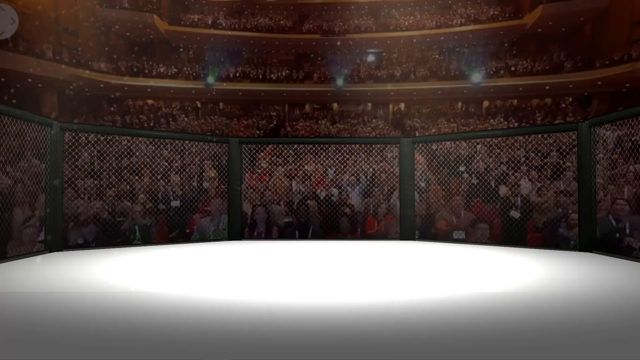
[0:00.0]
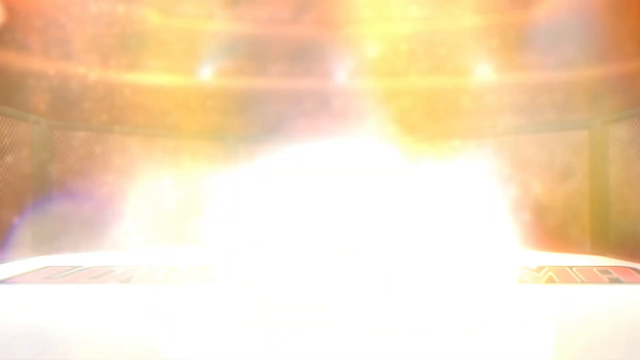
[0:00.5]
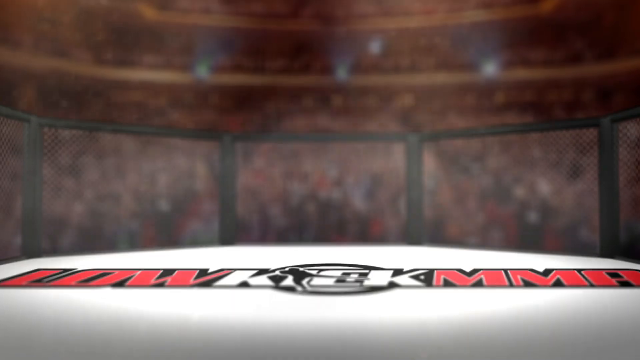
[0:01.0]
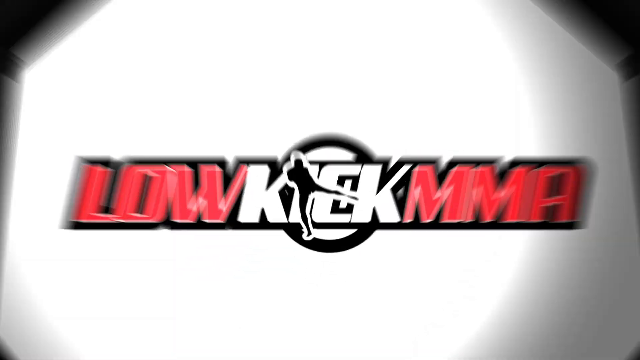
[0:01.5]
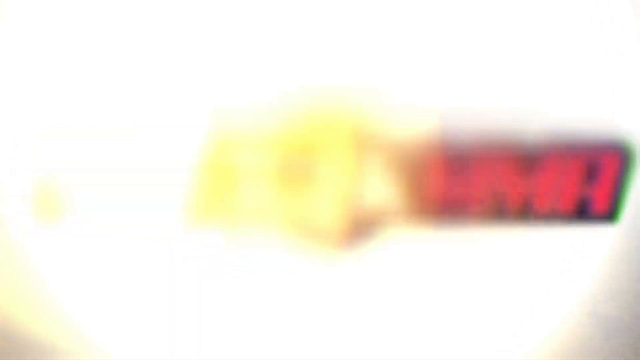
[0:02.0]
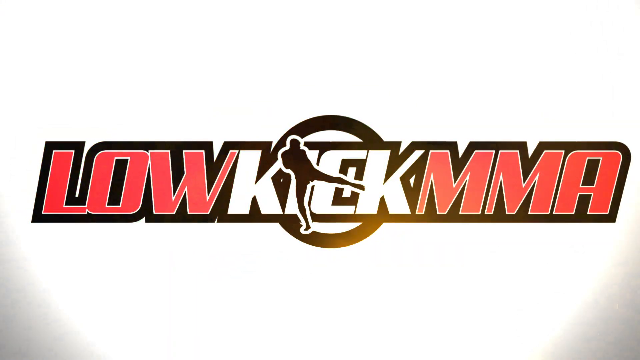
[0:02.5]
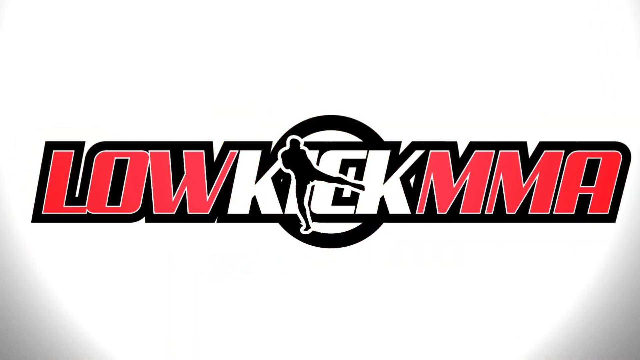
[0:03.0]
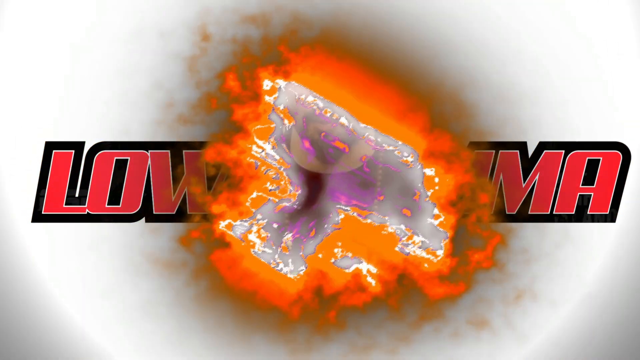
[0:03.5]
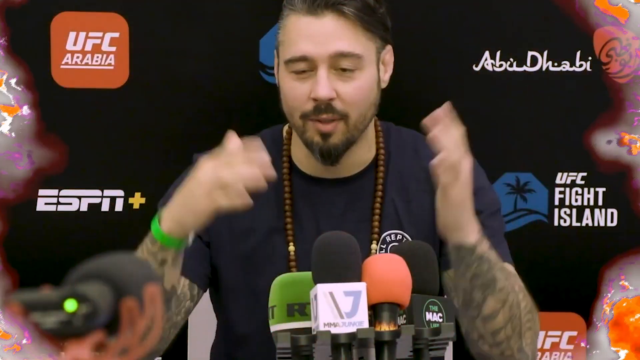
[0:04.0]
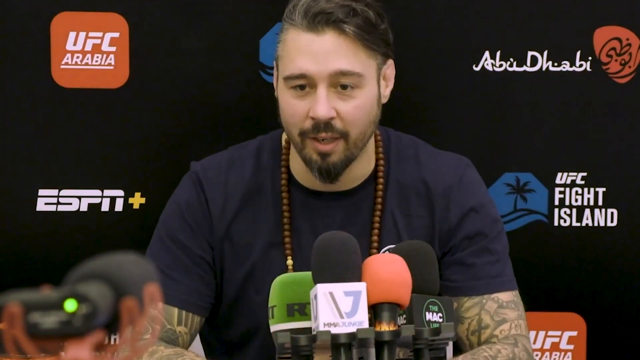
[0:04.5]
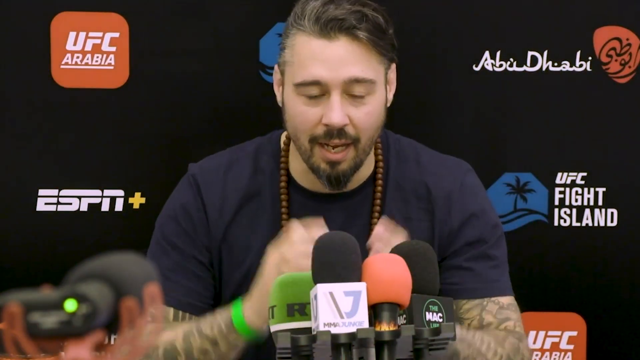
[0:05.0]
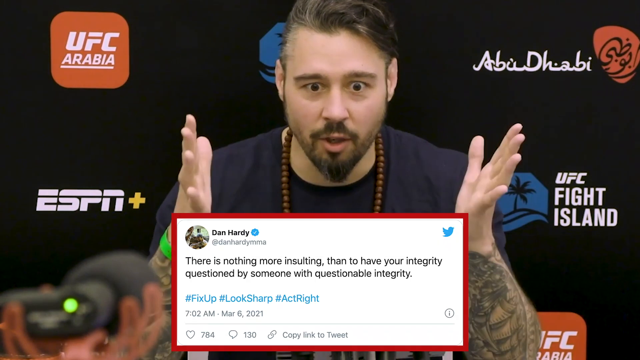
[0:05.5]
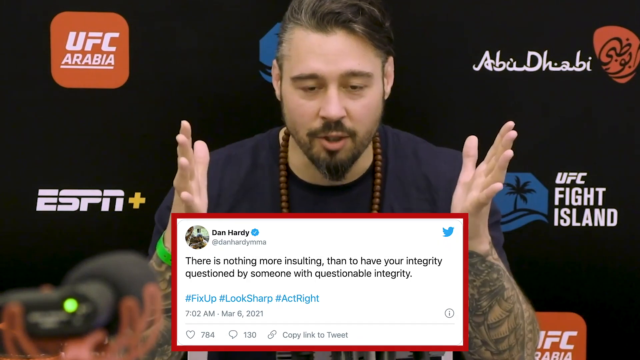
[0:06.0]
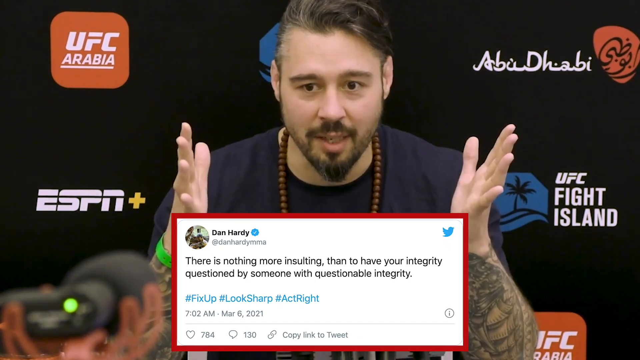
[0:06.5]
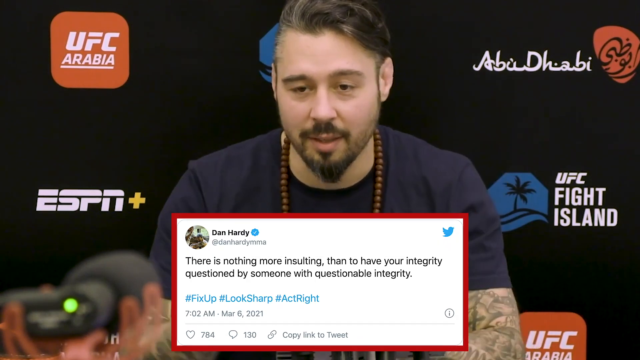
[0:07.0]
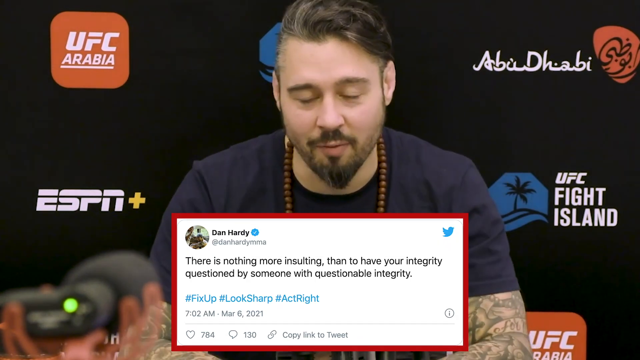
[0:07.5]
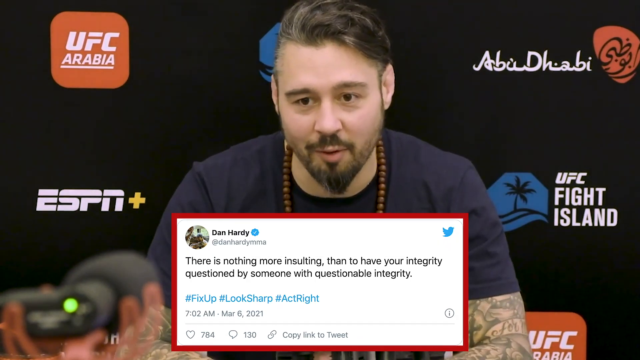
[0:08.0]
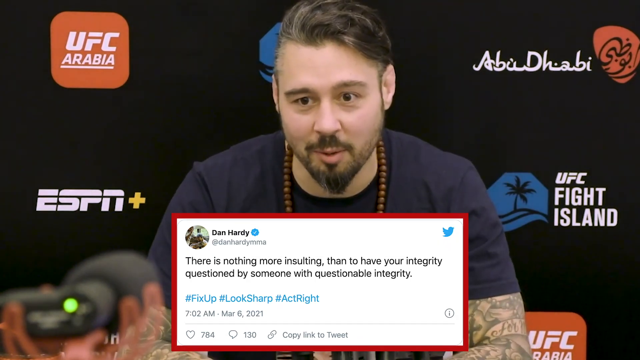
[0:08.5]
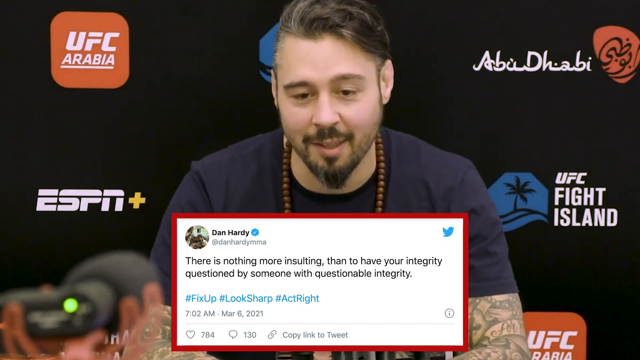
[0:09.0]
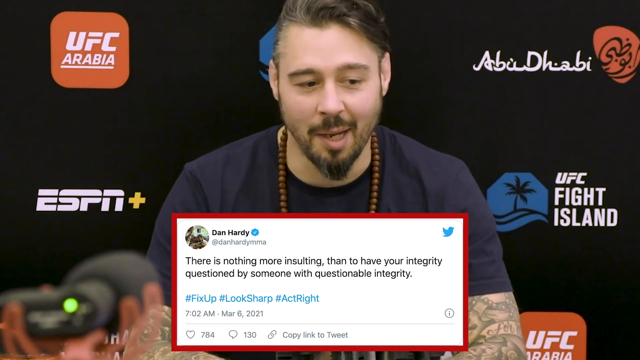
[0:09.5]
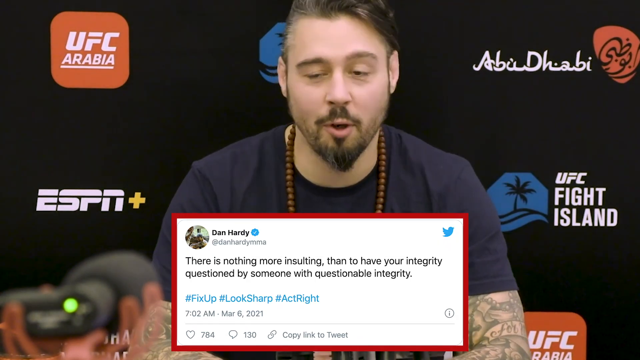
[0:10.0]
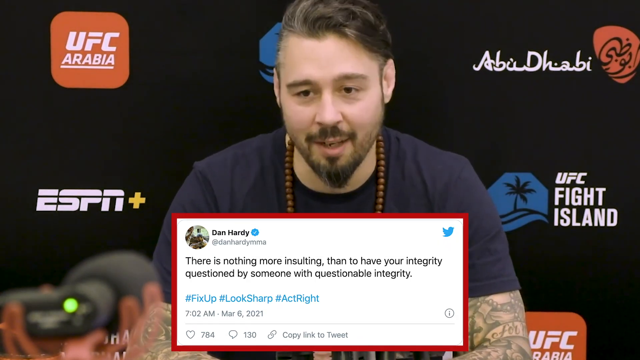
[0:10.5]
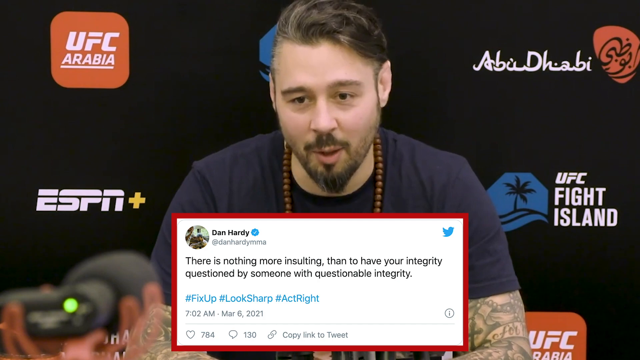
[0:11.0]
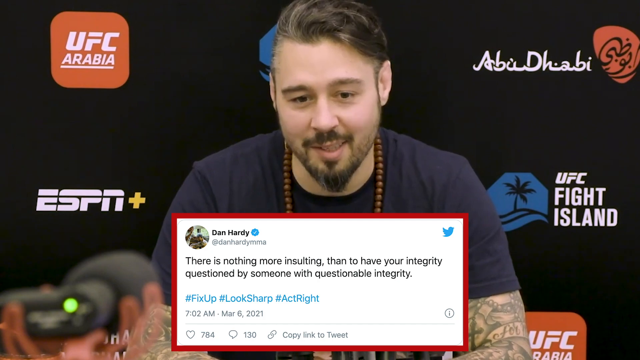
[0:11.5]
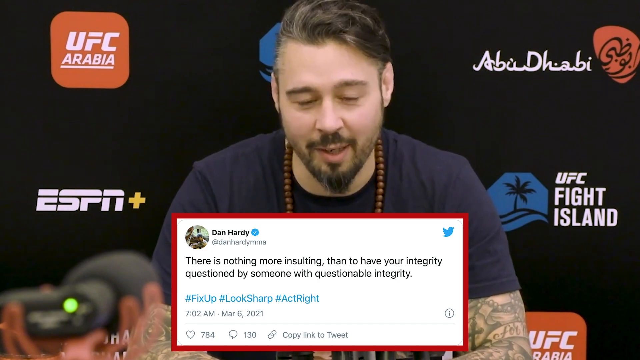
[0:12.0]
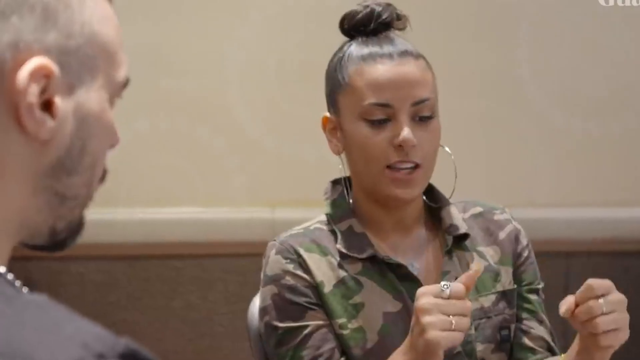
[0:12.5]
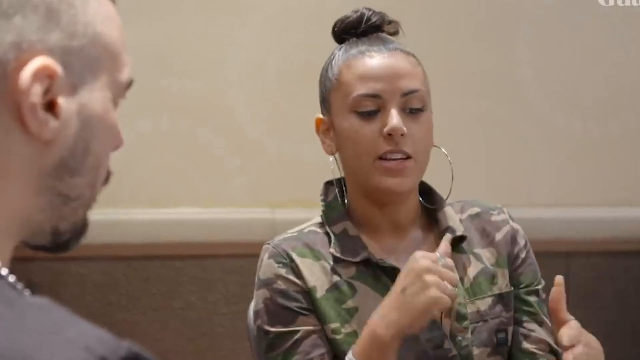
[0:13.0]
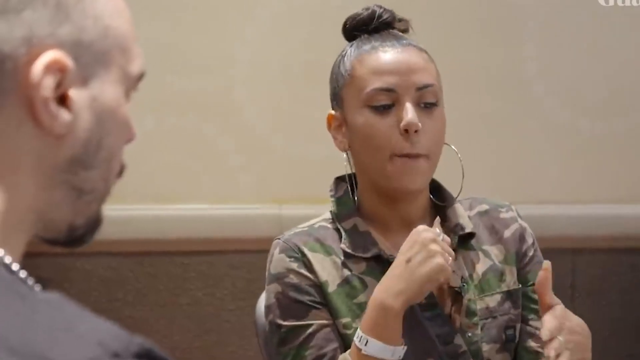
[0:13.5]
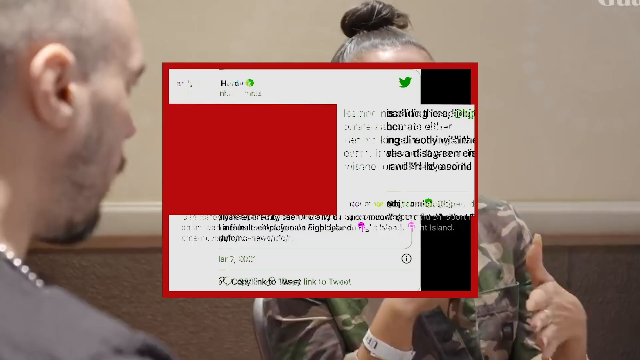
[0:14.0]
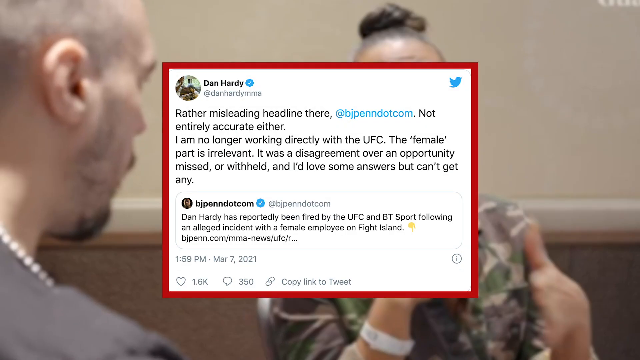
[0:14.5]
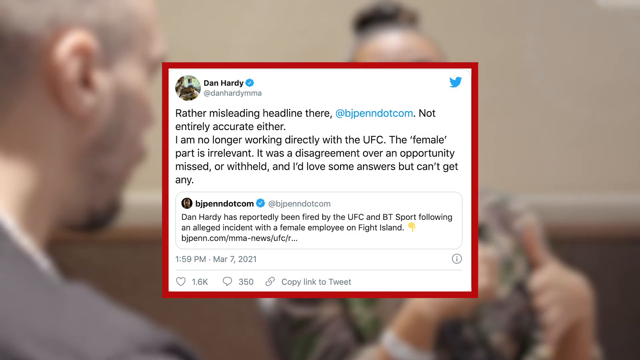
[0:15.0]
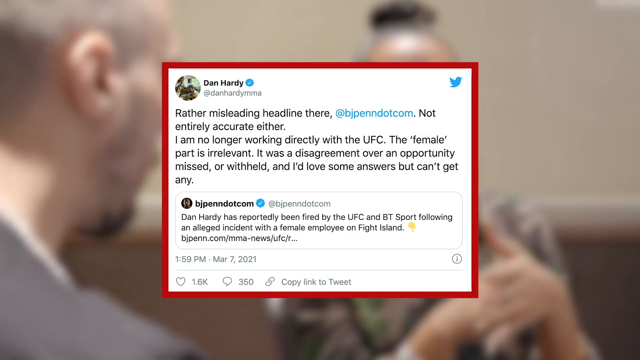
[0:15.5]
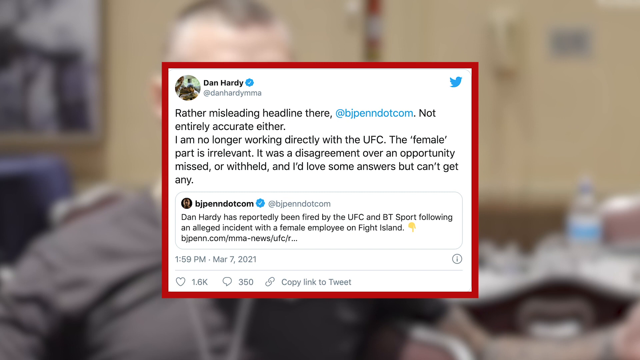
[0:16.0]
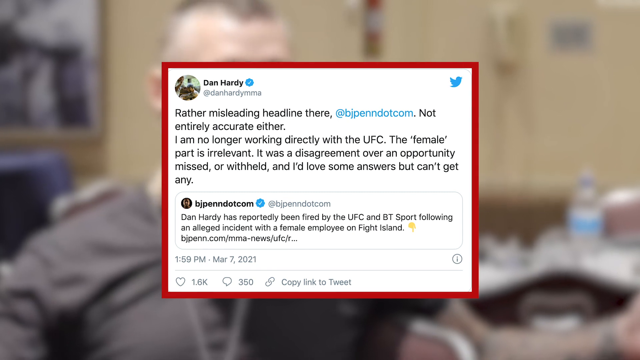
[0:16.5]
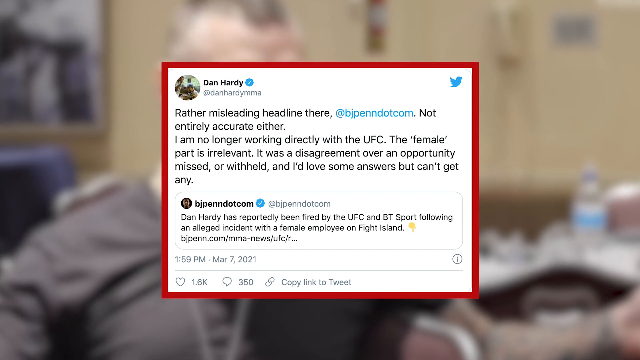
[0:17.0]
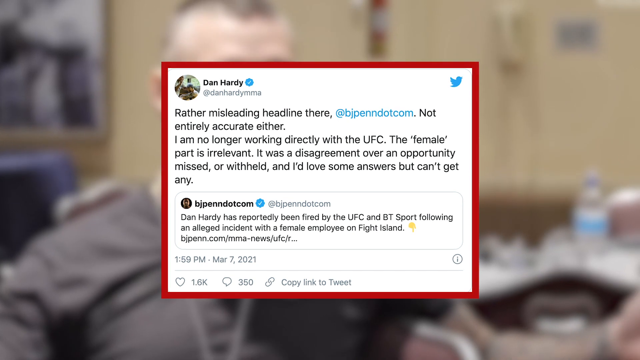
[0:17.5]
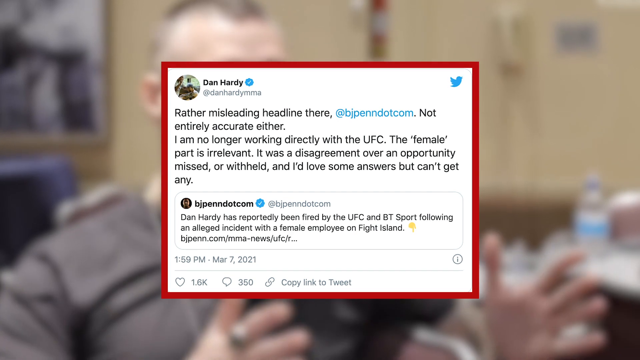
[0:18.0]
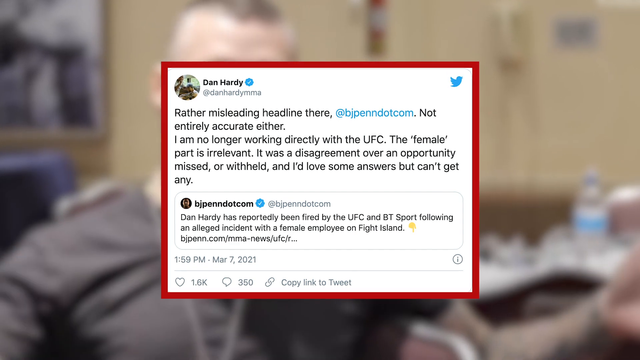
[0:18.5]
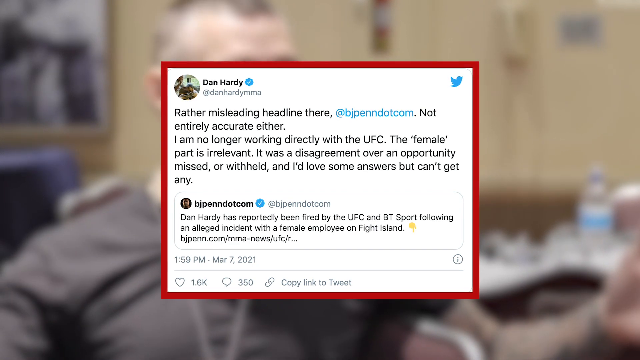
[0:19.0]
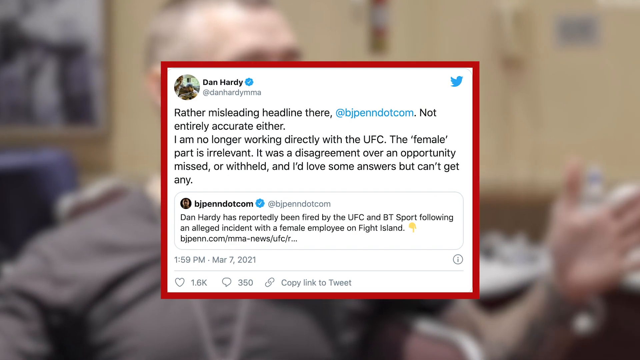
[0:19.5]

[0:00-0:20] An MMA fighting ring is shown, and a logo drops onto the ring, kicking up dust. The logo is for Low Kick MMA and depicts a stylized silhouette of a man raising his leg and performing a low kick fighting move. The logo fades away in an explosive effect, and a sports commentator sitting at a desk appears. Behind him is a black wall covered in sponsorship logos for UFC Arabia, ESPN+, Abu Dhabi, and UFC Fight Island. He wears a black shirt, has a green bracelet around his wrist, and has tattoos on his arms. He talks animatedly as a tweet appears beneath him. The tweet is by Dan Hardy and says "There is nothing more insulting than to have your integrity questioned by someone with questionable integrity." The commentator continues to talk while the tweet remains on screen. The video then cuts to a woman in camouflage with her hair in a bun and hoop earrings, talking to a man across from her who has a buzz cut and a beard. Another tweet by Dan Hardy appears, saying "Rather misleading headline there BJPin.com not entirely accurate either. I'm no longer working directly with the UFC The female part is irrelevant It was a disagreement over an opportunity missed or withheld and I'd love some answers, but can't get any."